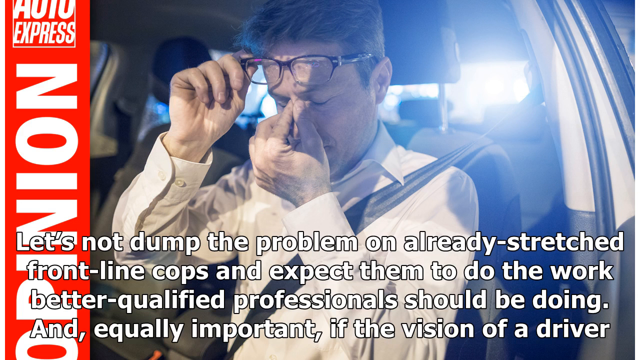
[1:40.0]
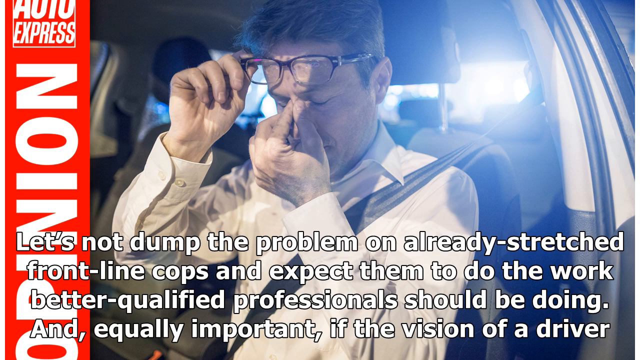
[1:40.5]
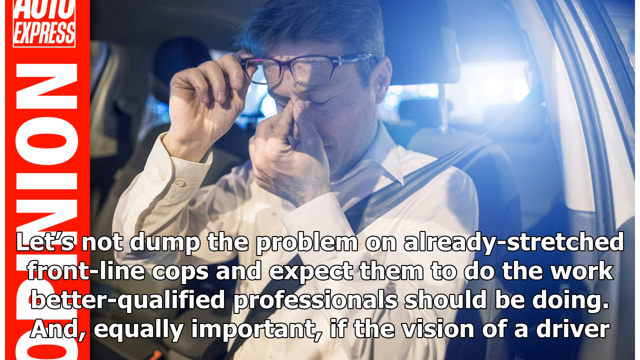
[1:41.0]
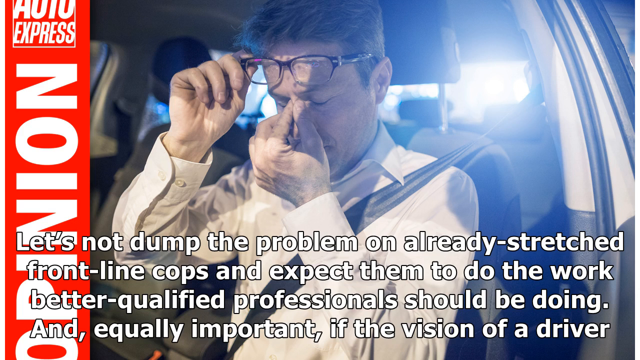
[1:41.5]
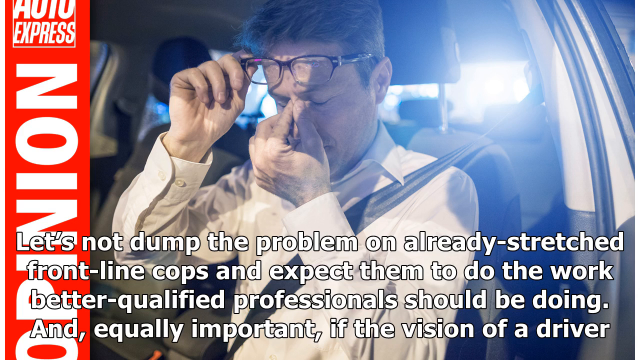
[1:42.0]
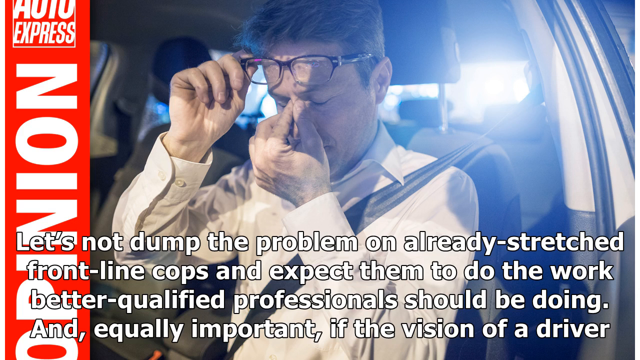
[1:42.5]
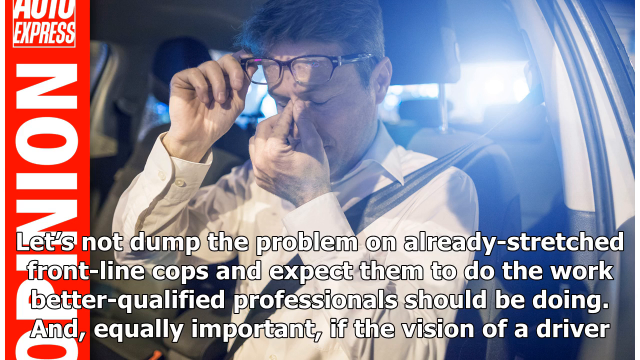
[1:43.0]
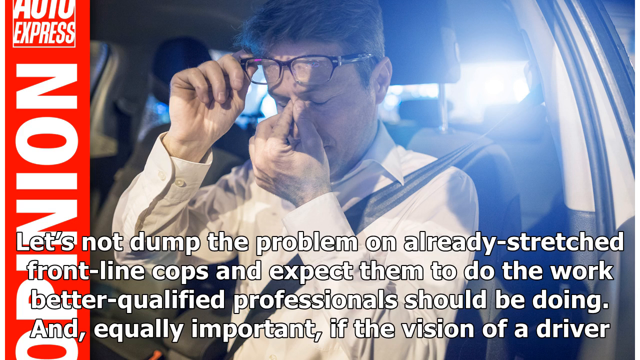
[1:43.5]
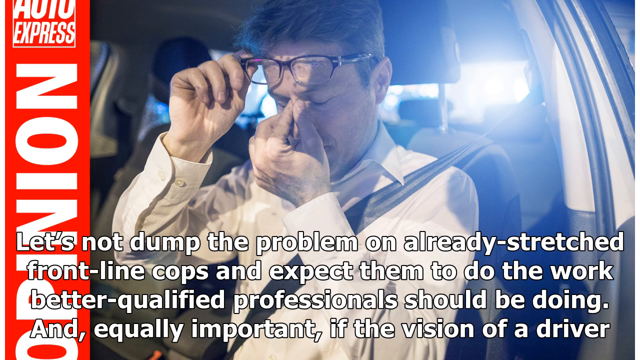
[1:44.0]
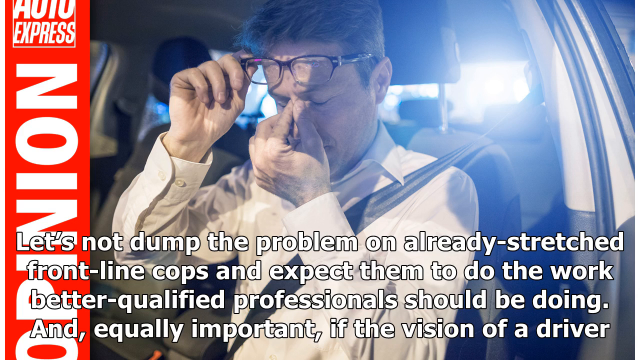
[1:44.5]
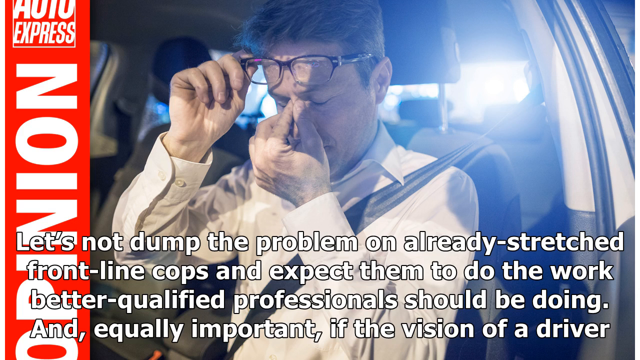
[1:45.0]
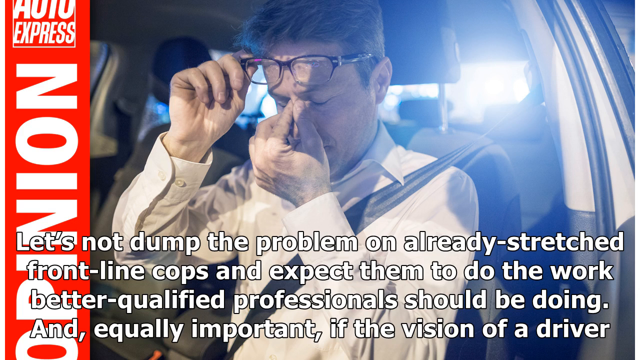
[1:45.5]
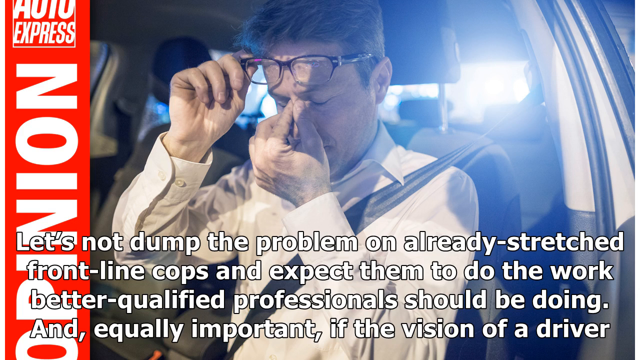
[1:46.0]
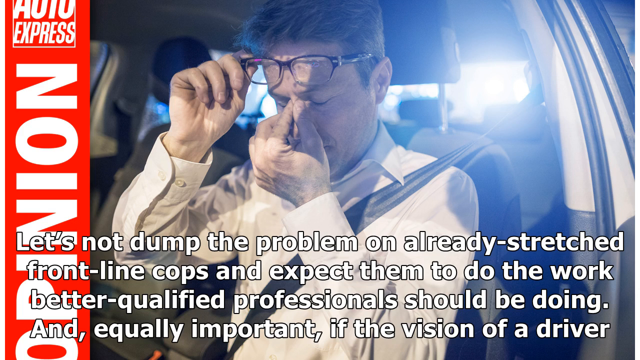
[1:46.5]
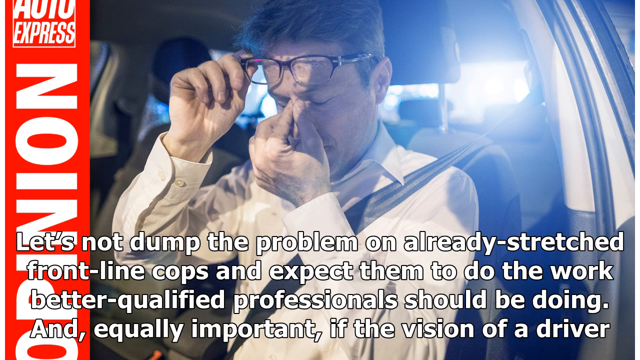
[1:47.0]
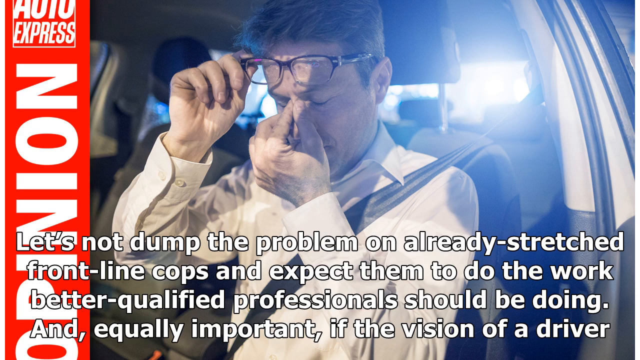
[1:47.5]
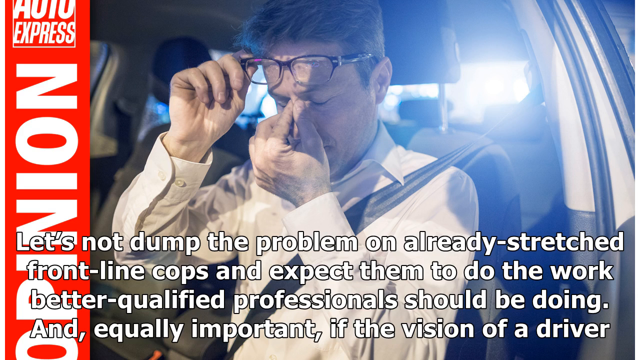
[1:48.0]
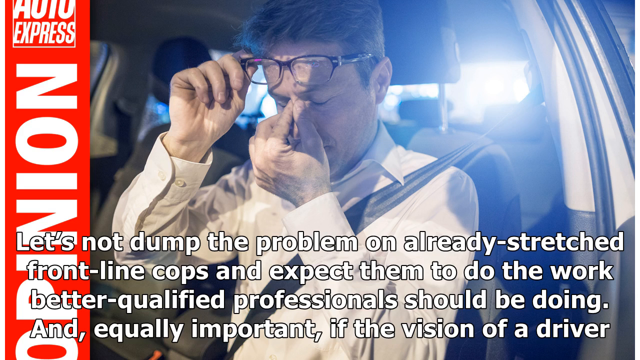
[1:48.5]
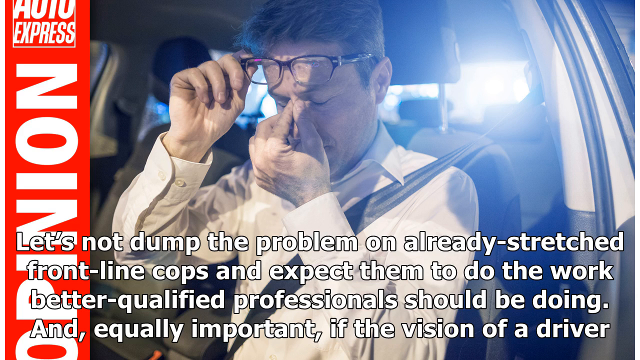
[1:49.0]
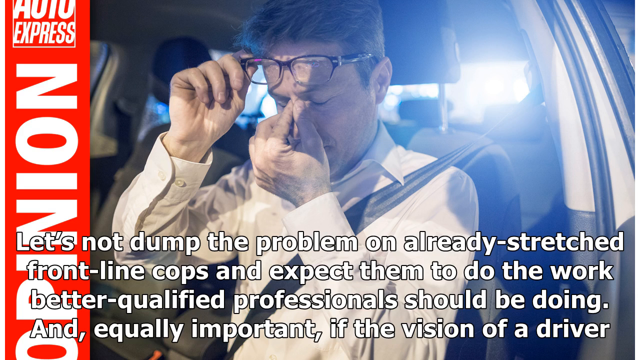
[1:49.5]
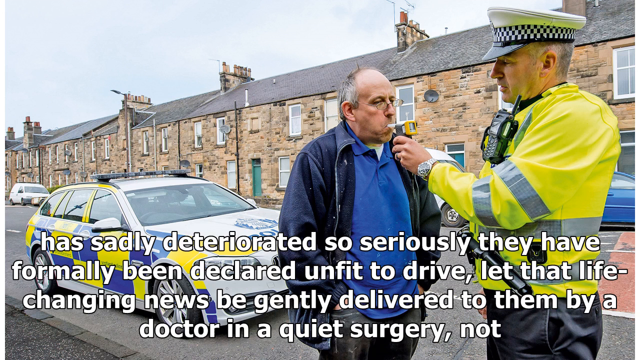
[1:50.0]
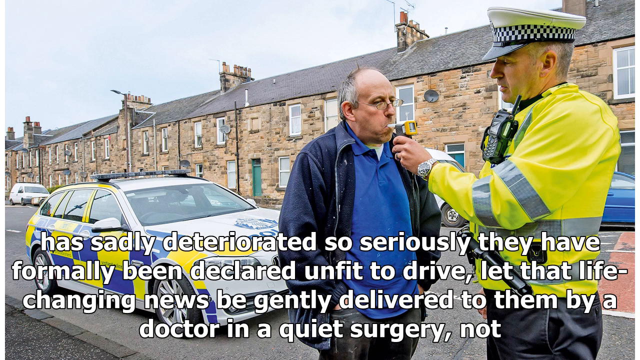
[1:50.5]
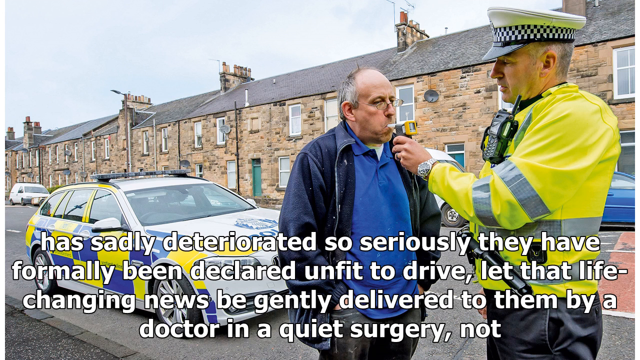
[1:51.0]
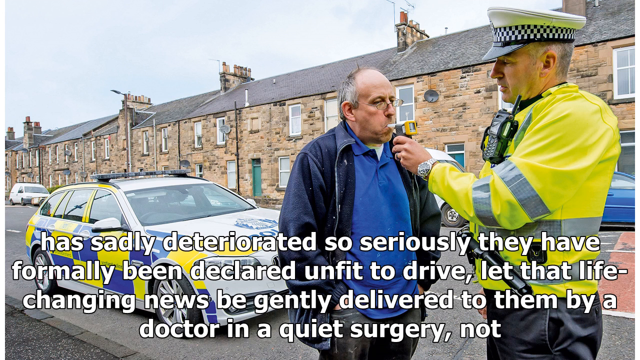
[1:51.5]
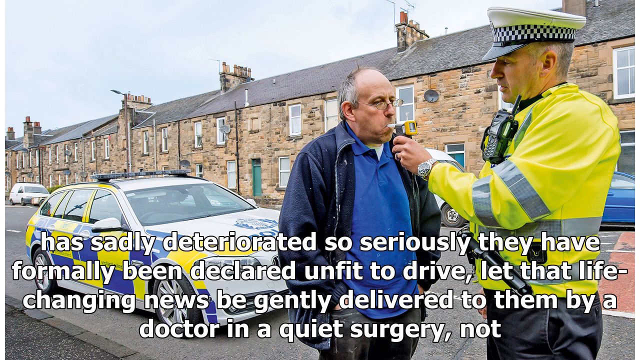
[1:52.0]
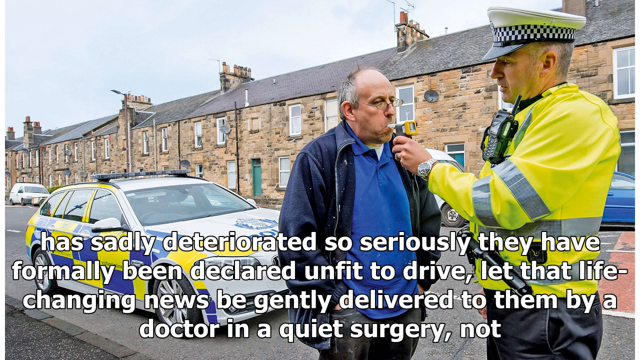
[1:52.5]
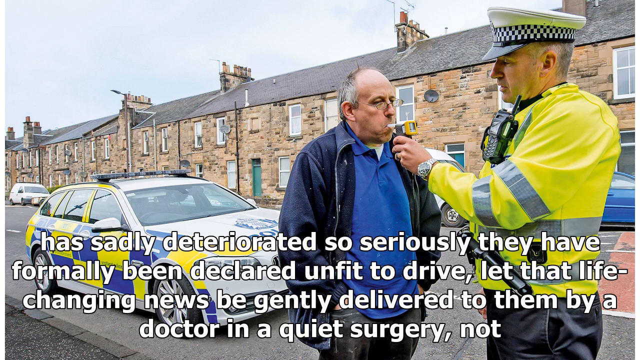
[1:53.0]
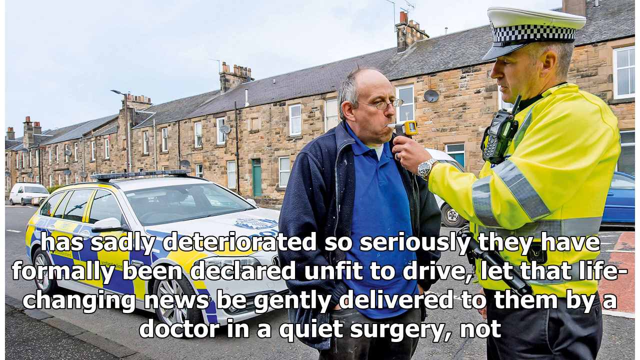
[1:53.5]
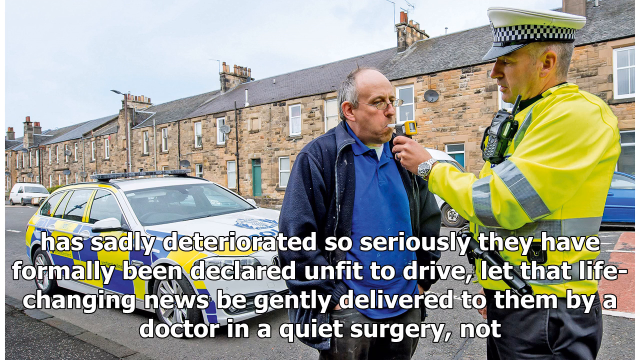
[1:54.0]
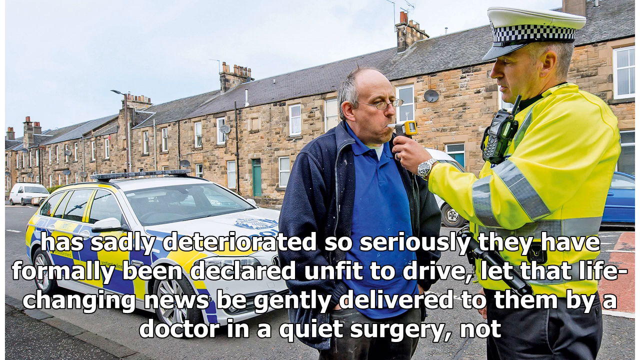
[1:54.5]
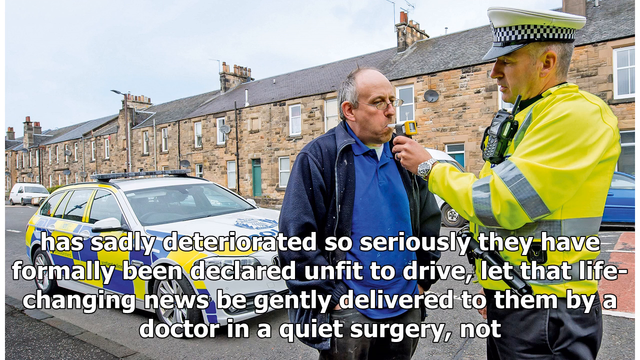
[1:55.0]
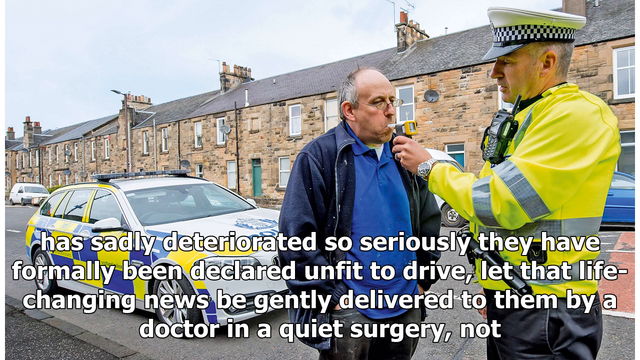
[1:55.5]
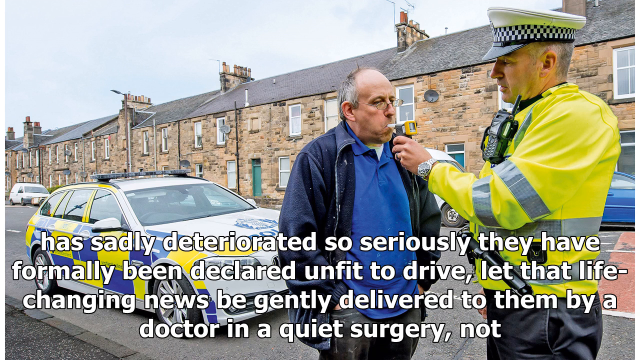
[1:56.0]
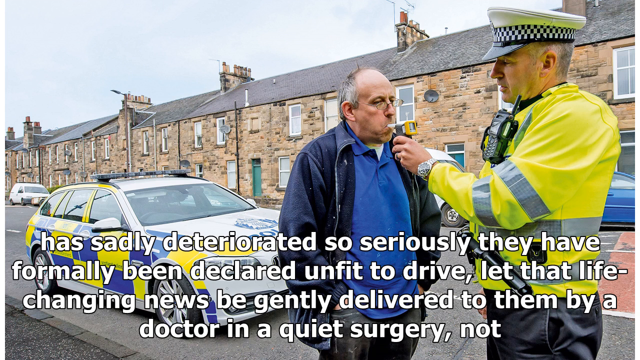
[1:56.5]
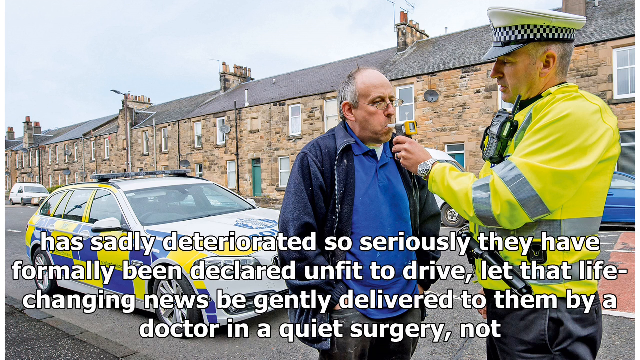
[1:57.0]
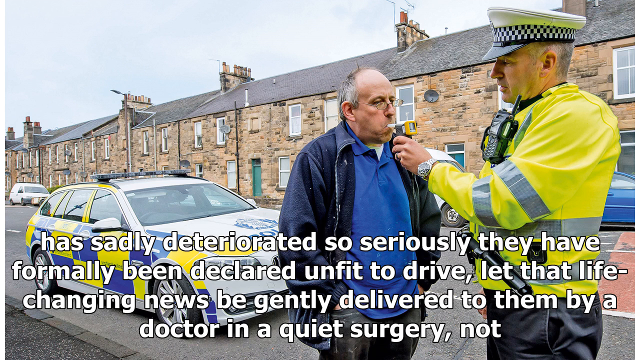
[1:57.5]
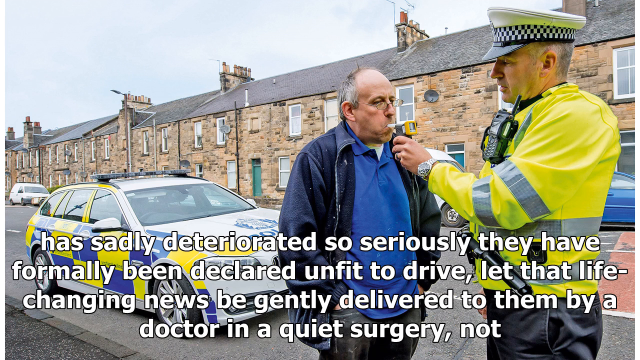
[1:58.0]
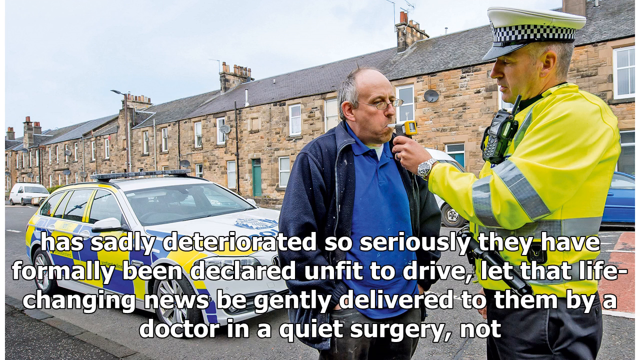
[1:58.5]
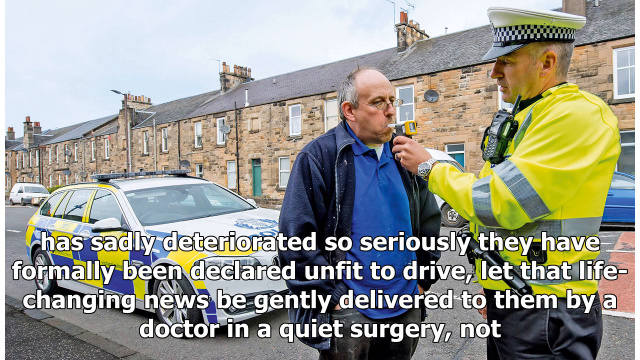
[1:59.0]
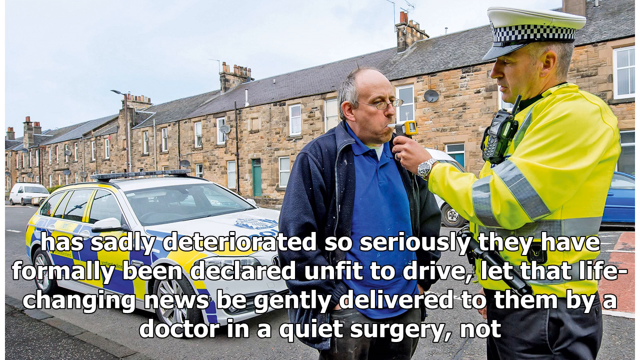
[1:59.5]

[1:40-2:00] Text says not to dump the problem on frontline cops and expect them to do the work better qualified professionals should be doing. Someone sitting in their car has their glasses raised onto their forehead and is kind of pinching the temple area. Text refers to sight that has sadly deteriorated so seriously that the person has formally been declared unfit to drive, and to life-changing news. Other topics follow while the same pictures remain, and text reads "changing news can be gently delivered to them by a quiet person." The person in the picture seems upset, maybe with a headache.